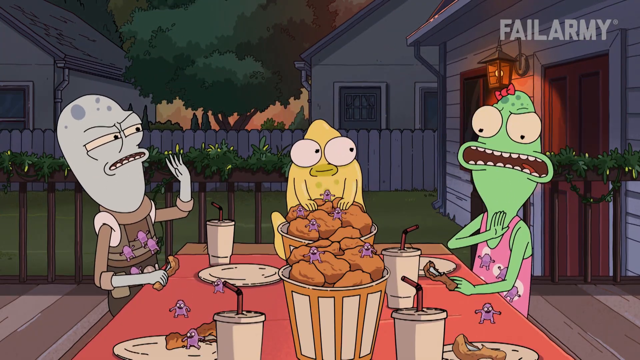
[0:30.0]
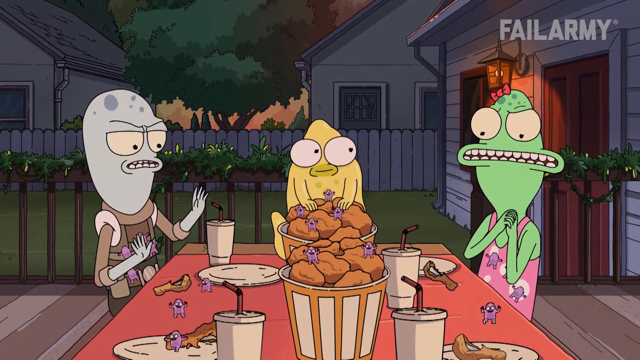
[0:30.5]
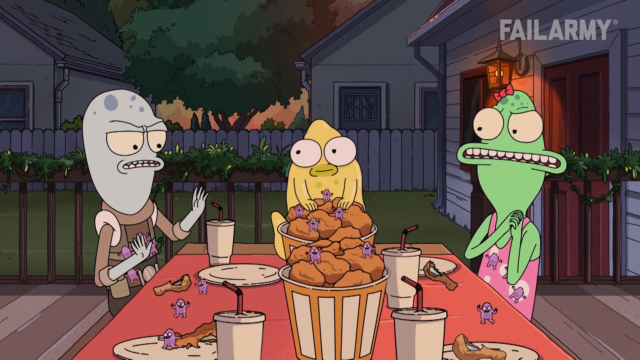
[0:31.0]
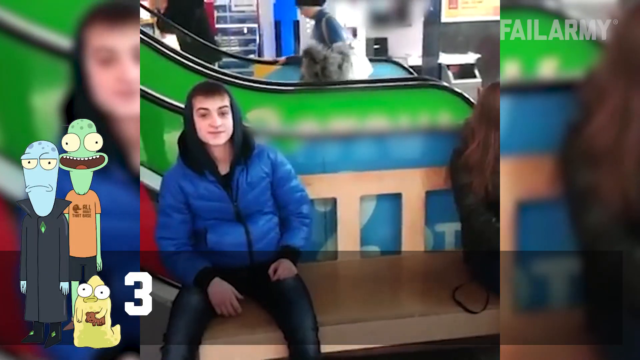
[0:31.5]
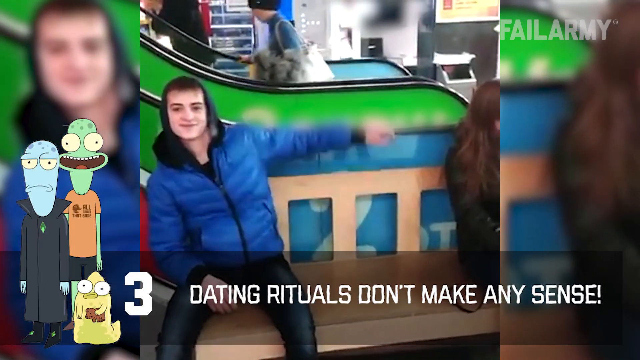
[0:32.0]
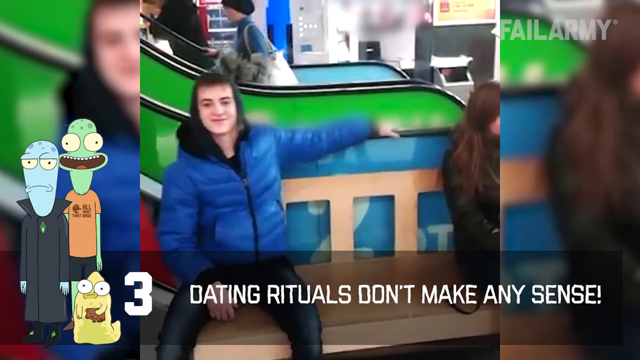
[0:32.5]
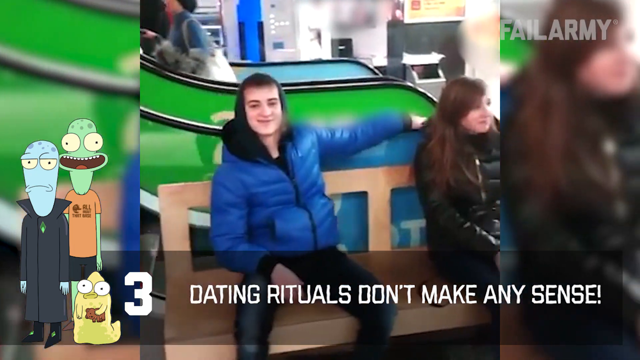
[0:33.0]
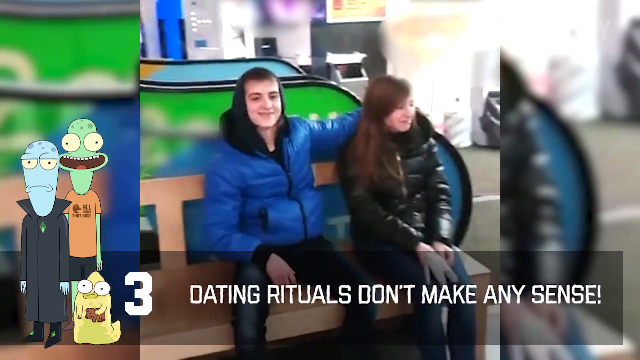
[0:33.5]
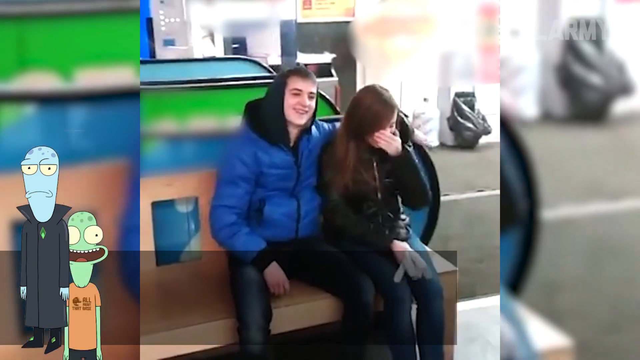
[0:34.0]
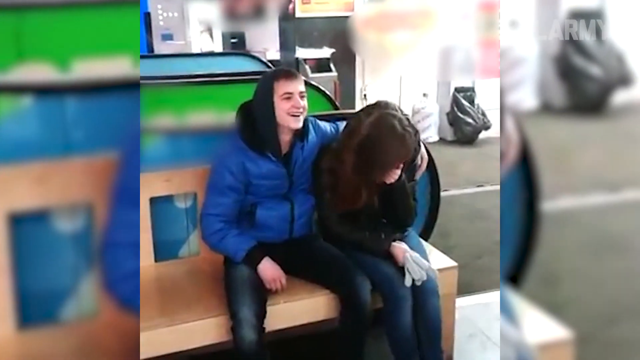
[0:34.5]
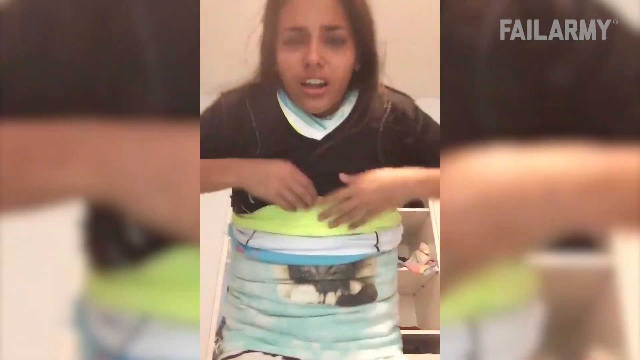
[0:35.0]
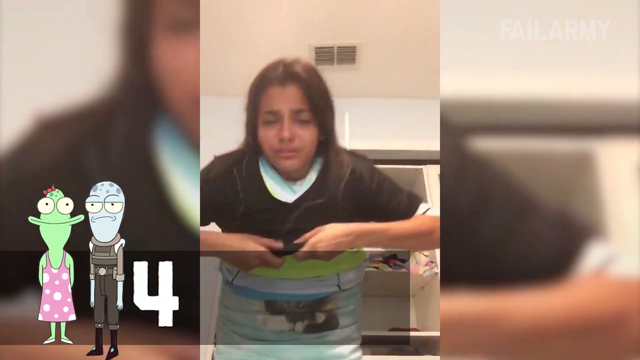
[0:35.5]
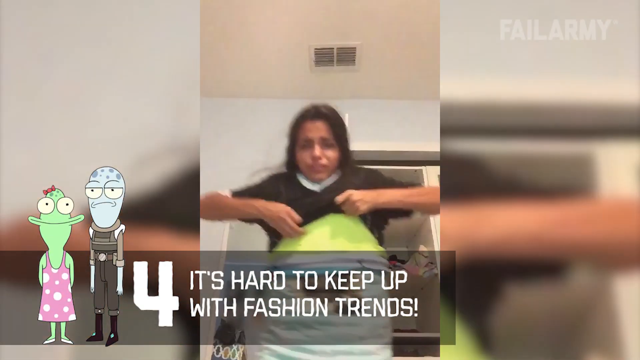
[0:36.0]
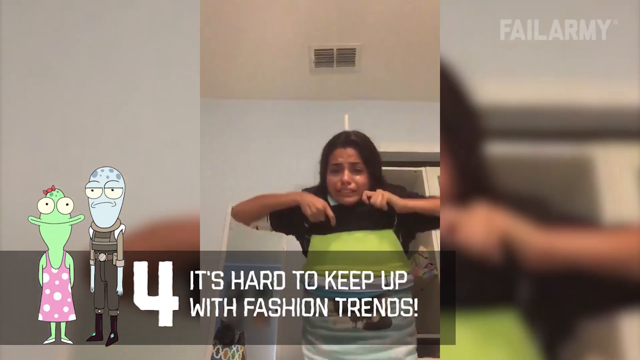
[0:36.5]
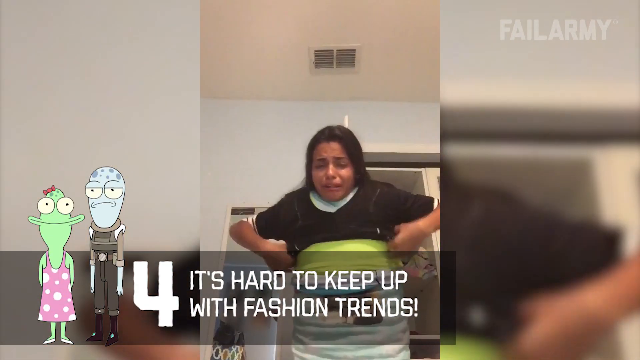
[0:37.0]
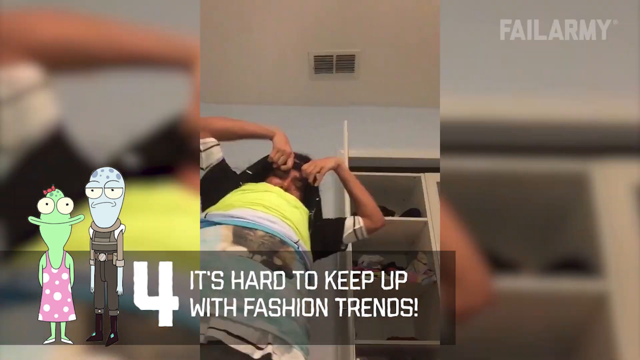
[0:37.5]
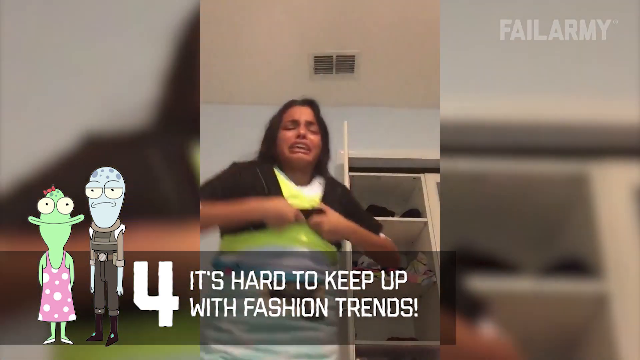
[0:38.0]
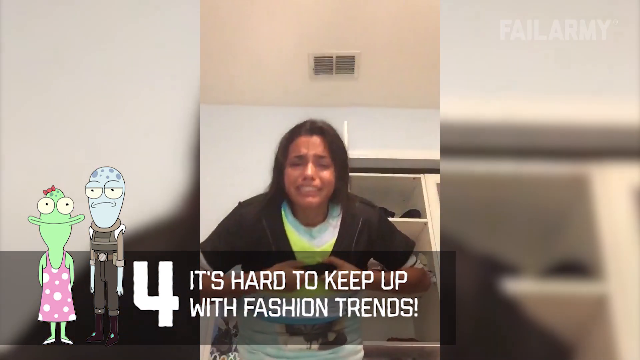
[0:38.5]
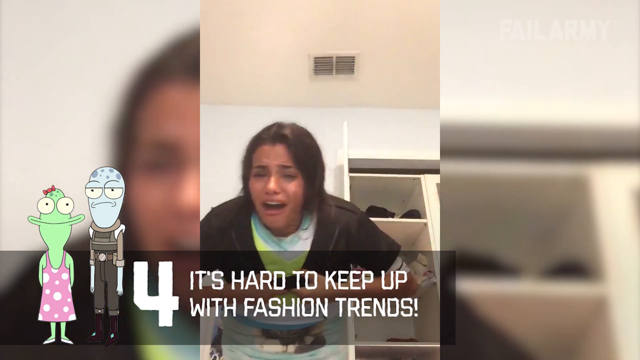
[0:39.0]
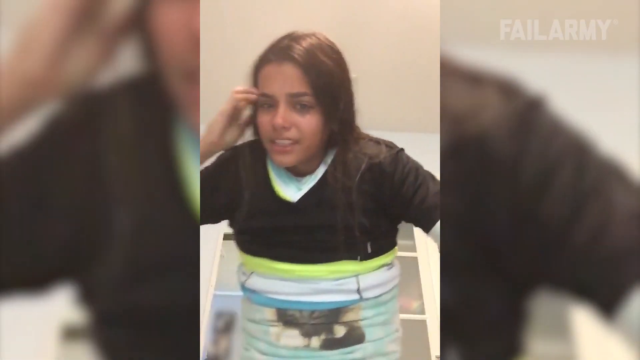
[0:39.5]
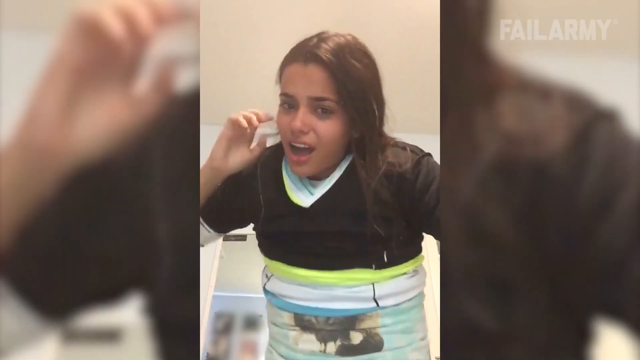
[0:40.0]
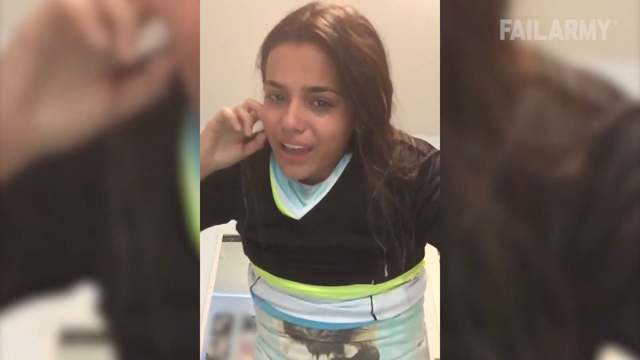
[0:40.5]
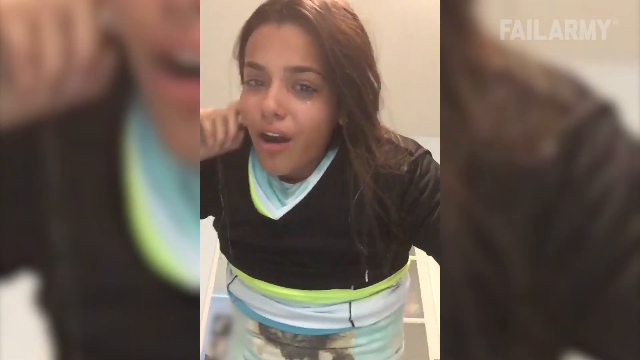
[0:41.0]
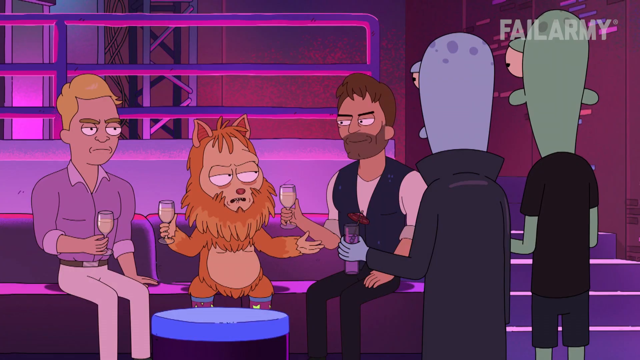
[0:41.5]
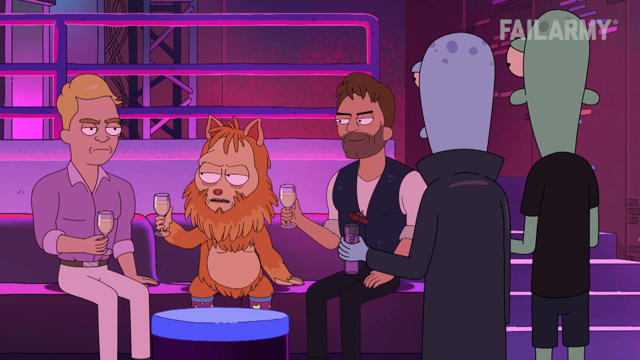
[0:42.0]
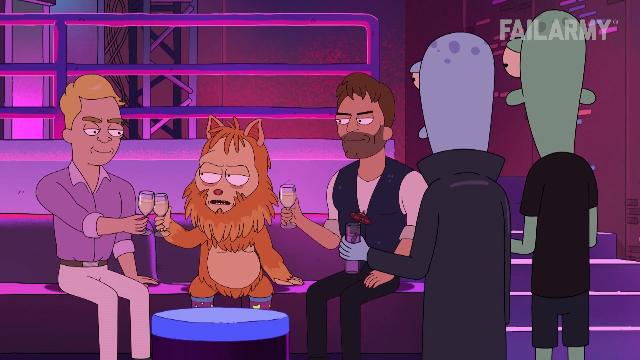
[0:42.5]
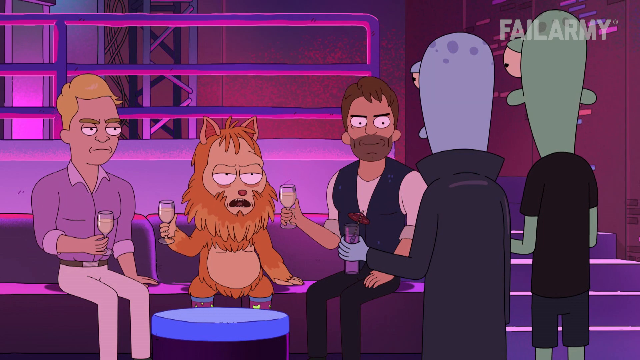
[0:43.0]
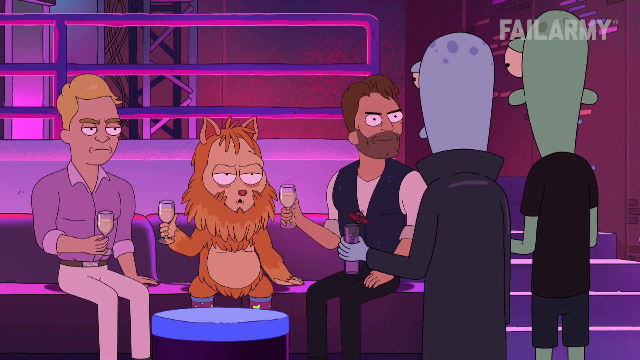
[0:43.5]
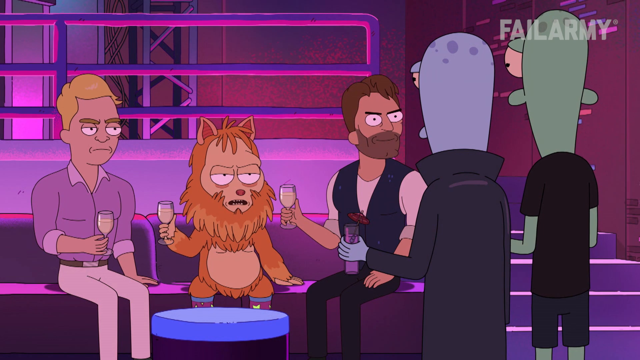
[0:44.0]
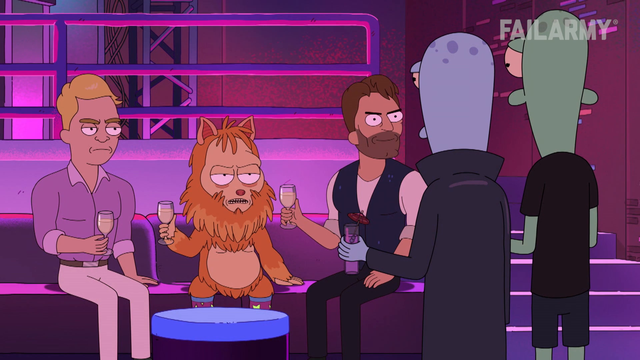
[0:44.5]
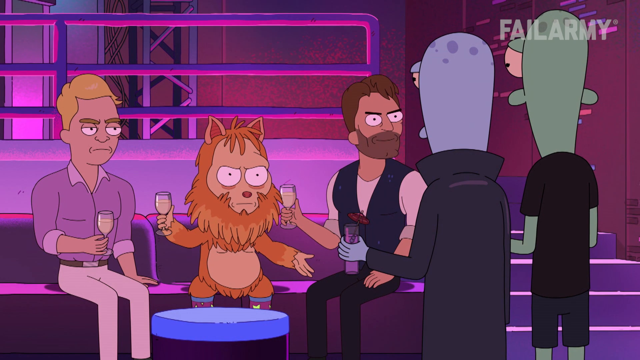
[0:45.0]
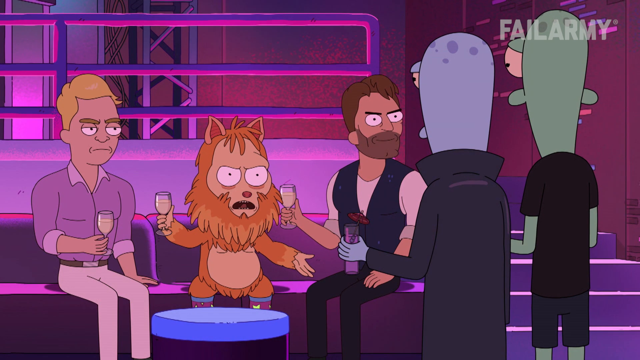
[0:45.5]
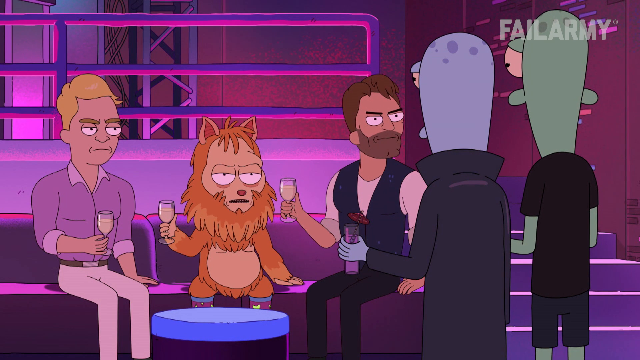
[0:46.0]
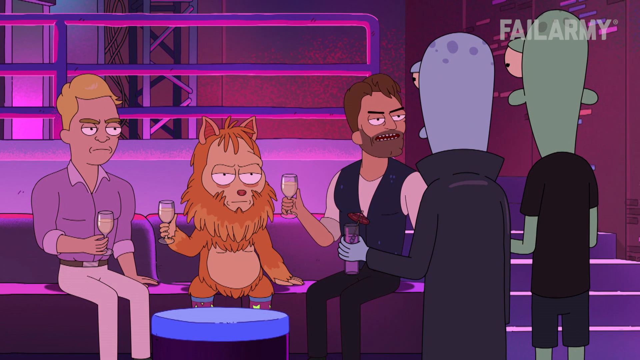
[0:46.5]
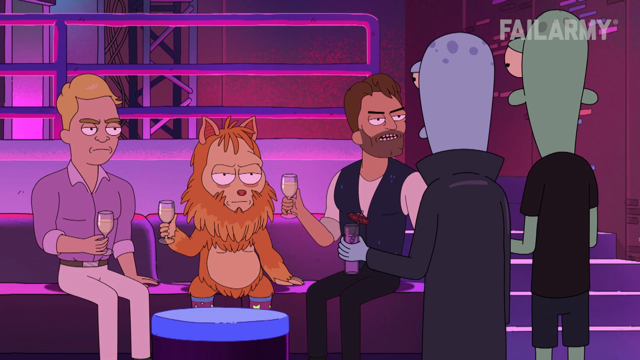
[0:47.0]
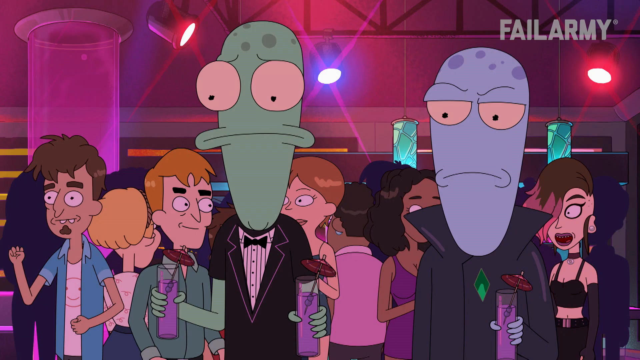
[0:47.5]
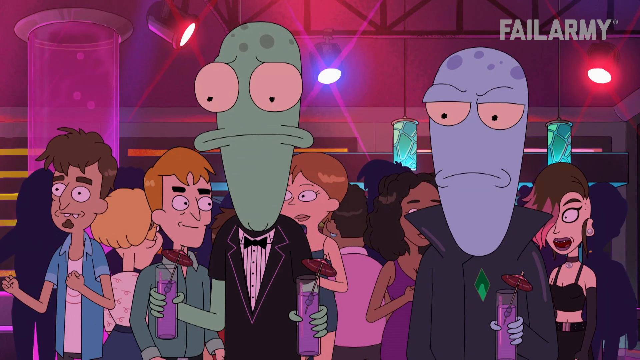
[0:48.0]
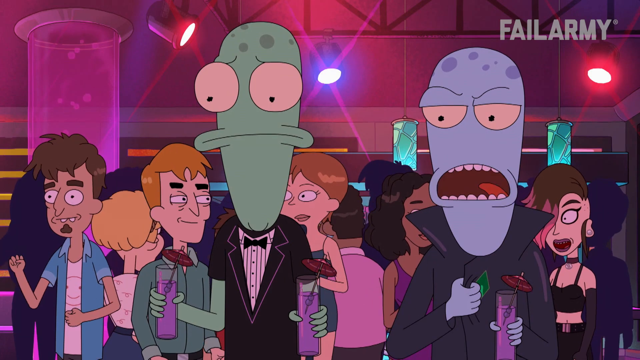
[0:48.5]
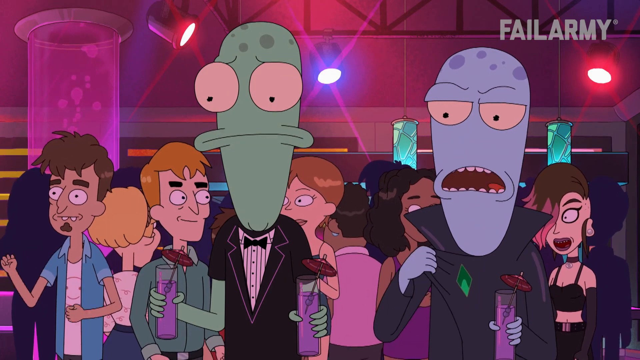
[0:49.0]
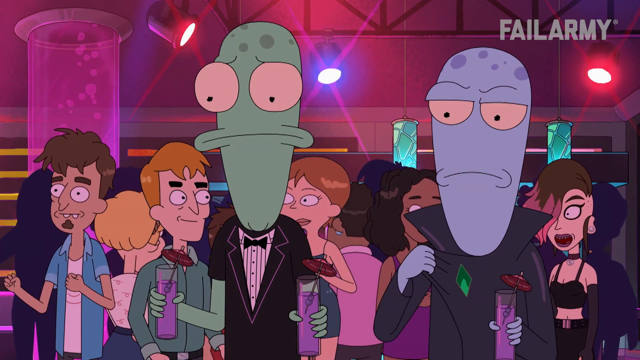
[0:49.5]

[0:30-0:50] The cartoon characters are apparently eating dinner, followed by images of real people doing various things. Another scene shows cartoon characters apparently on a talk show, talking to guests, with what look like people dancing on the cartoon talk show. Many images follow of young people doing things that look goofy or maybe slightly dangerous. With the words "dating rituals don't make any sense," a guy puts his arm around a girl sitting on a bench; she looks embarrassed and puts her hand over her face. Next, with the words "hard to keep up with fashion trends," a young woman, probably Indian or some kind of Asian, pulls up an outfit that looks like a t-shirt in black and white with an orangish greenish streak around the middle.